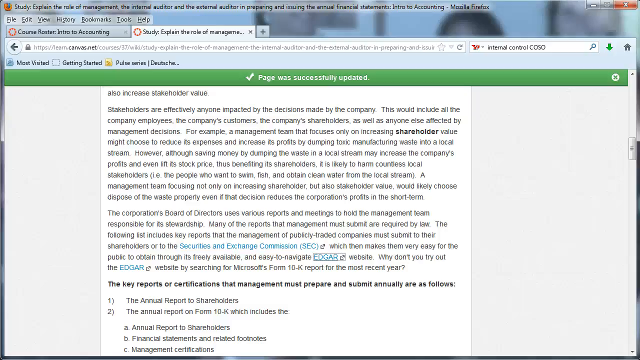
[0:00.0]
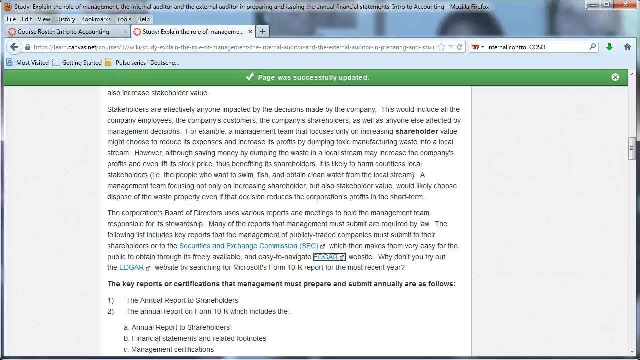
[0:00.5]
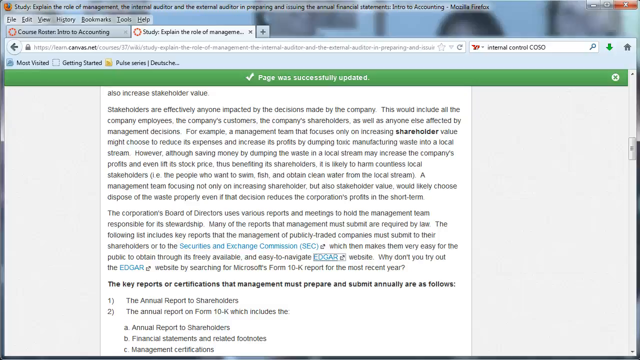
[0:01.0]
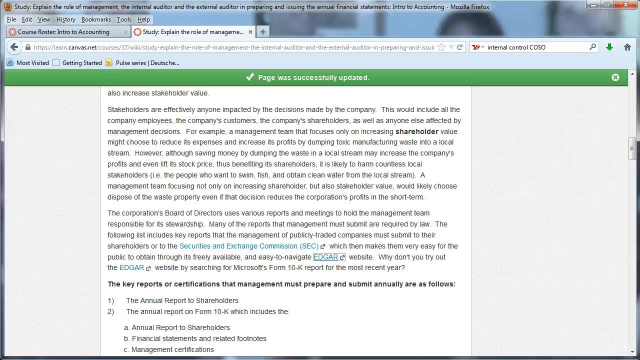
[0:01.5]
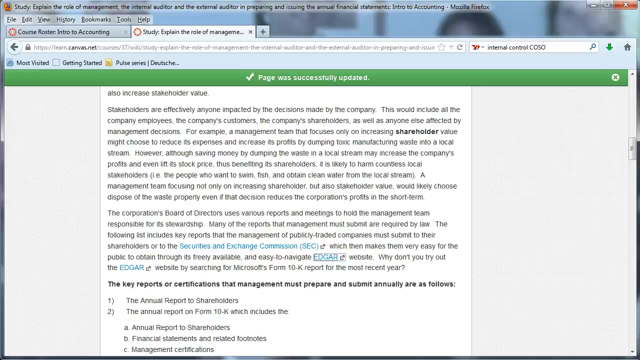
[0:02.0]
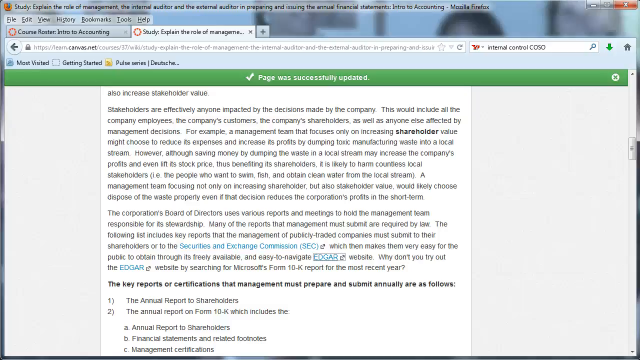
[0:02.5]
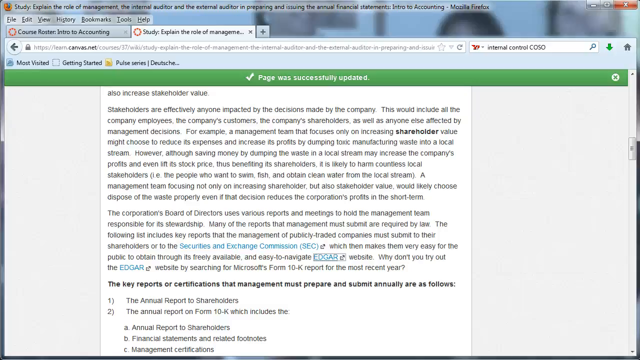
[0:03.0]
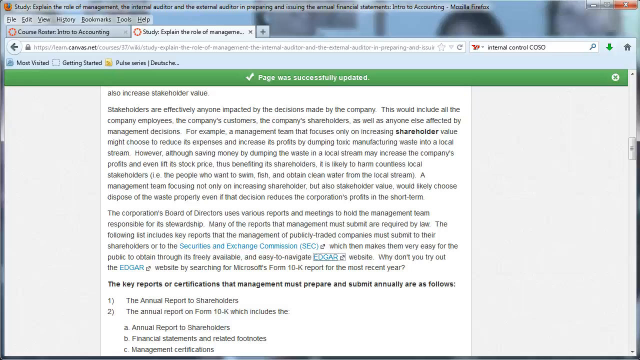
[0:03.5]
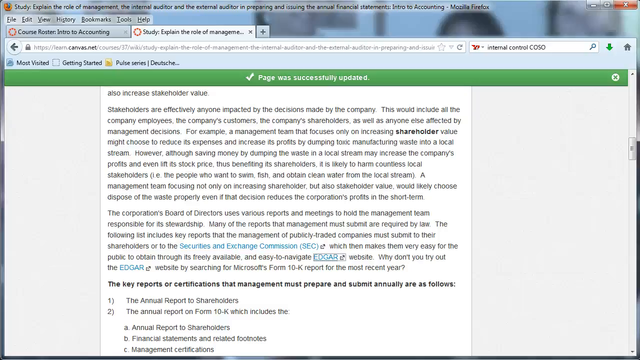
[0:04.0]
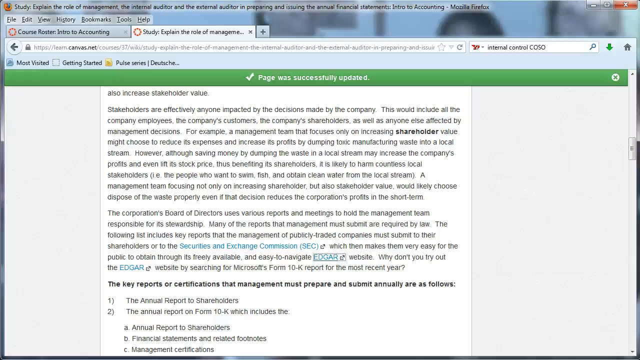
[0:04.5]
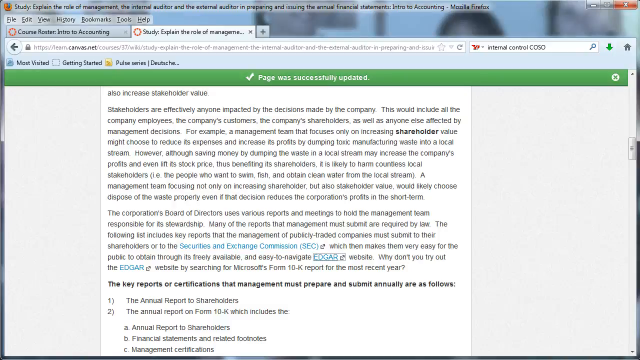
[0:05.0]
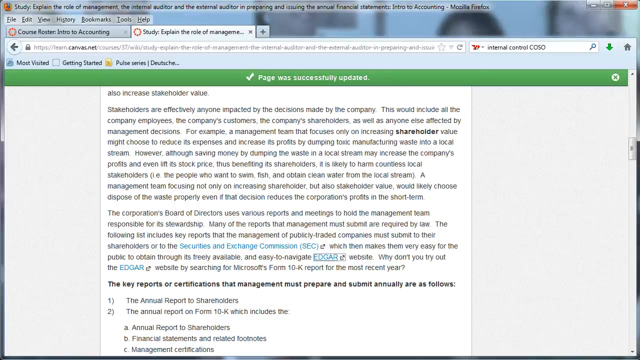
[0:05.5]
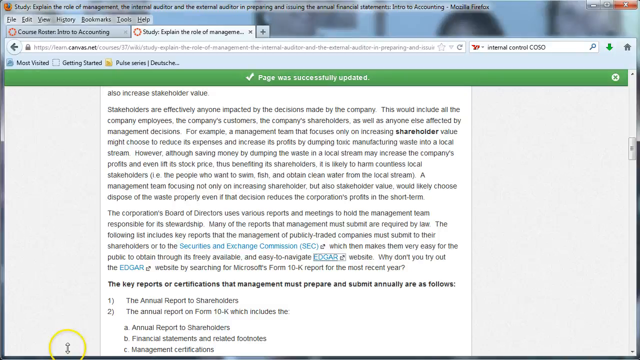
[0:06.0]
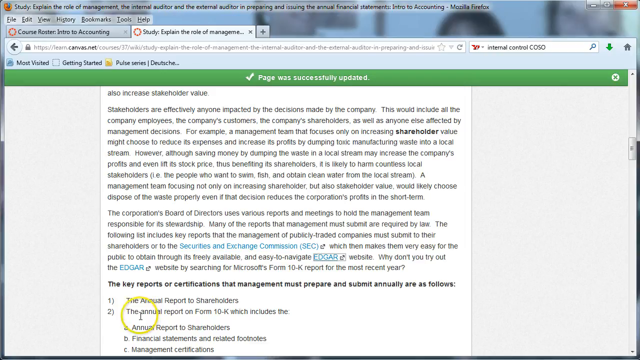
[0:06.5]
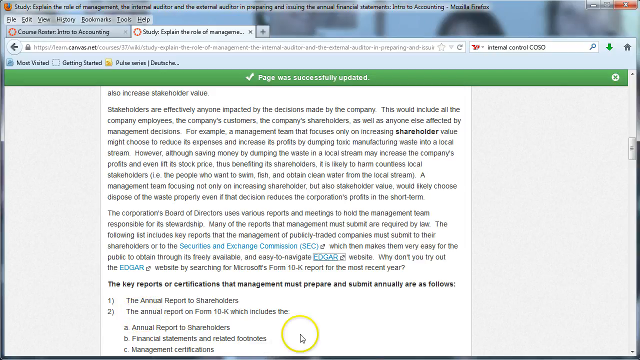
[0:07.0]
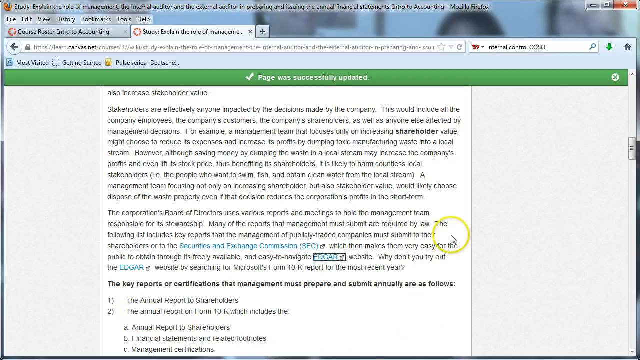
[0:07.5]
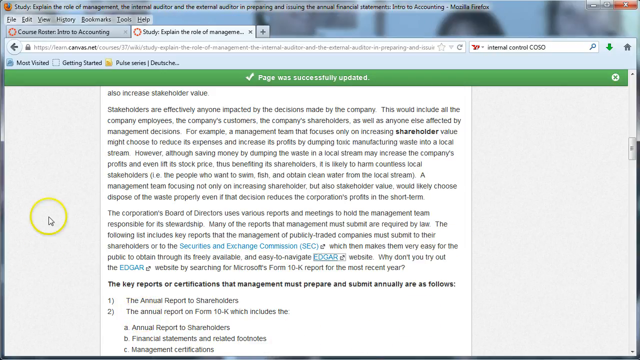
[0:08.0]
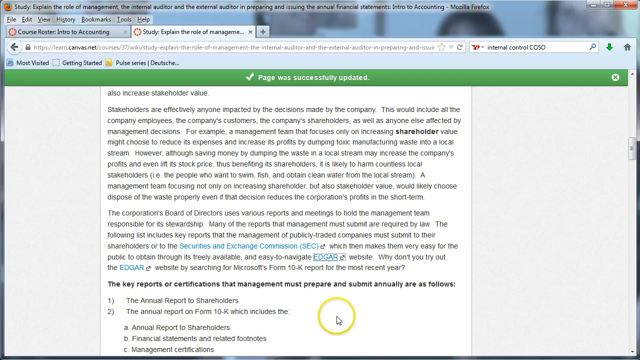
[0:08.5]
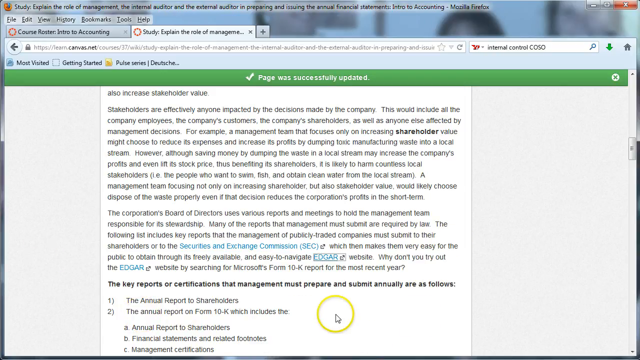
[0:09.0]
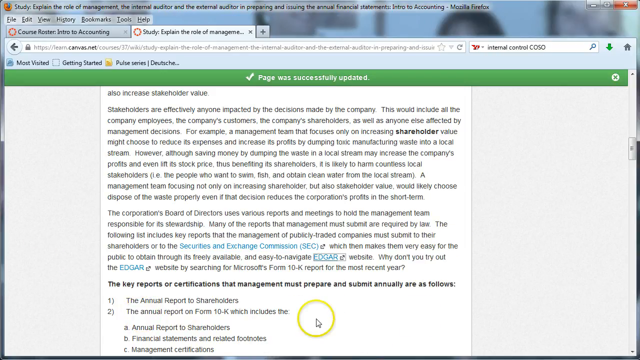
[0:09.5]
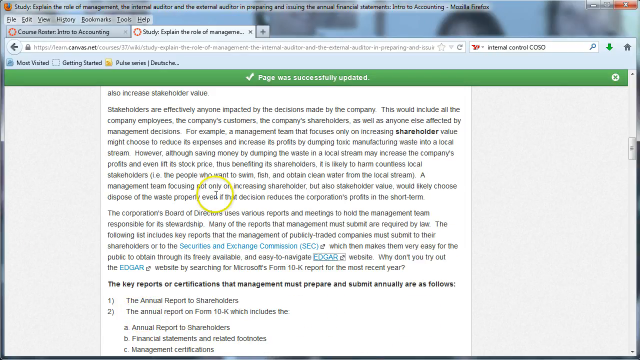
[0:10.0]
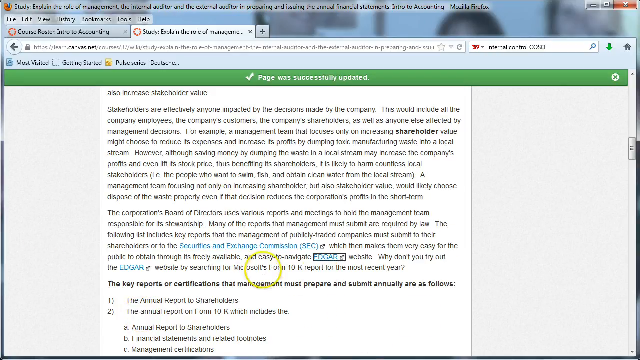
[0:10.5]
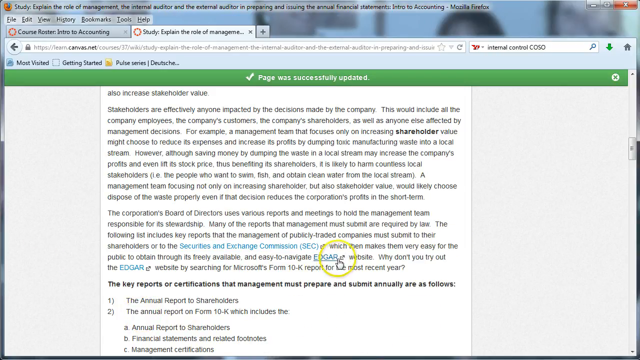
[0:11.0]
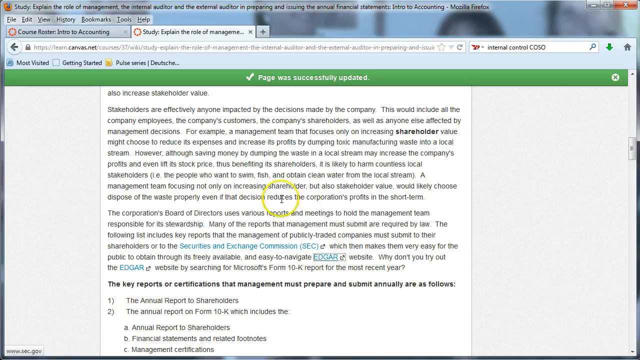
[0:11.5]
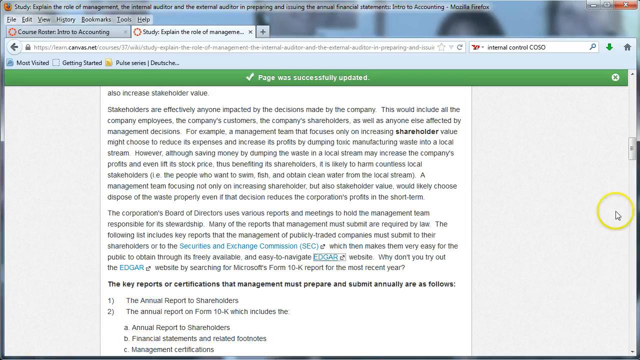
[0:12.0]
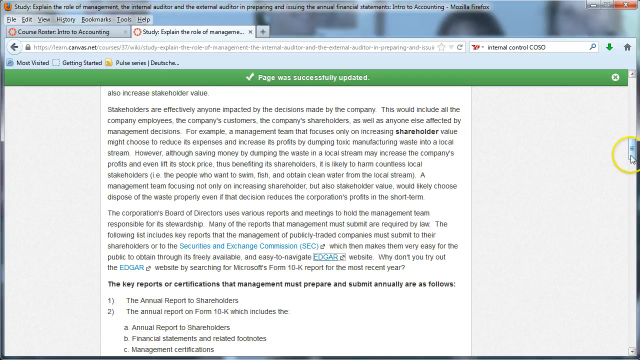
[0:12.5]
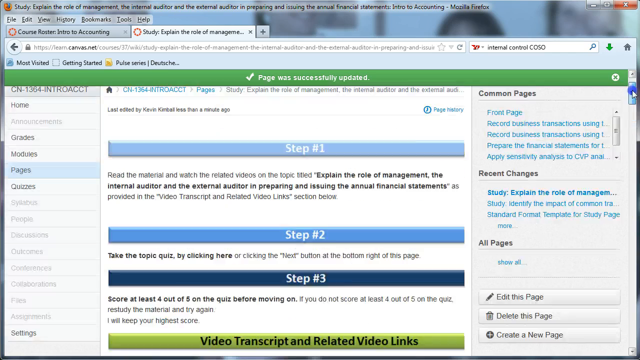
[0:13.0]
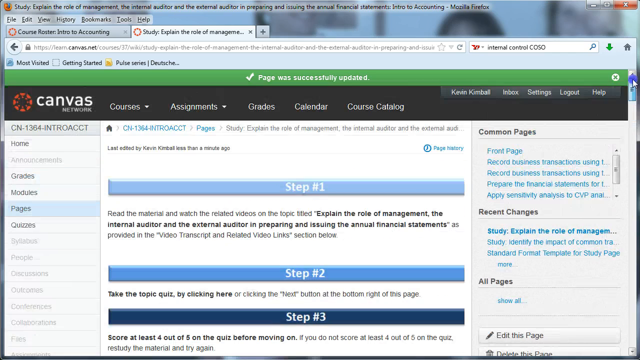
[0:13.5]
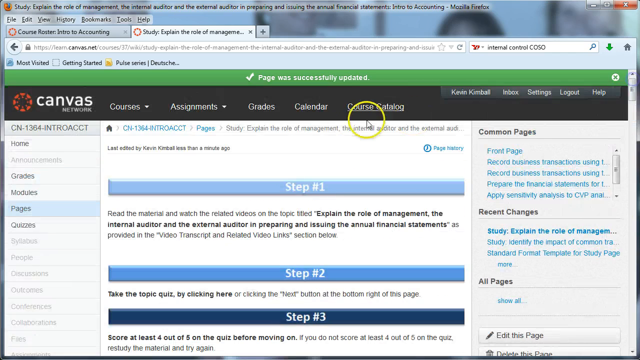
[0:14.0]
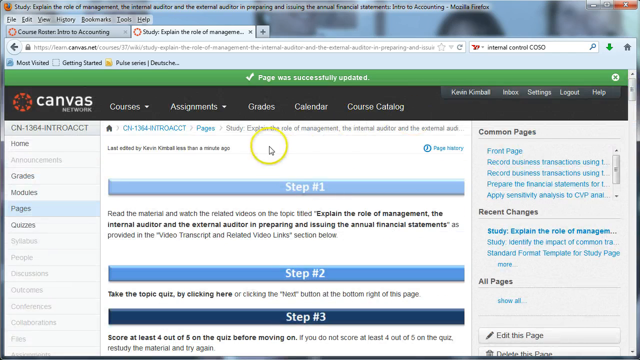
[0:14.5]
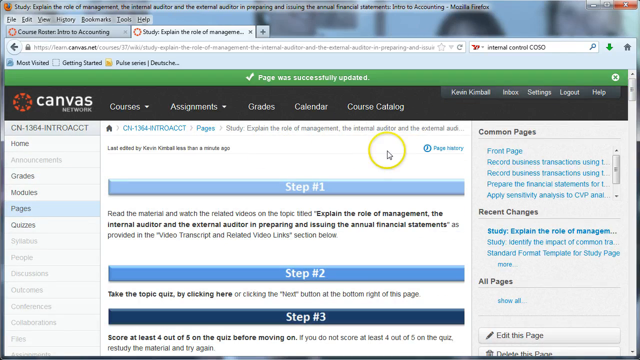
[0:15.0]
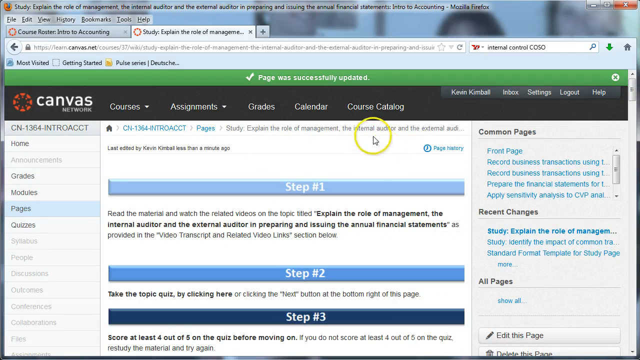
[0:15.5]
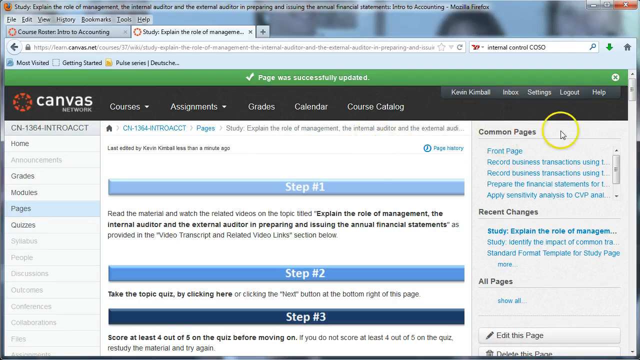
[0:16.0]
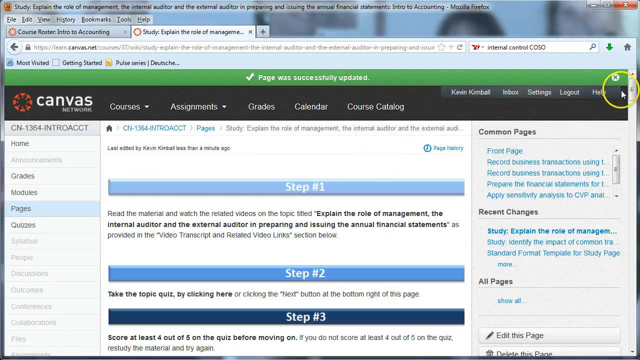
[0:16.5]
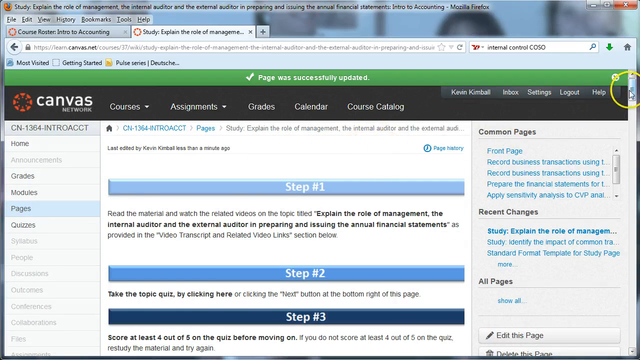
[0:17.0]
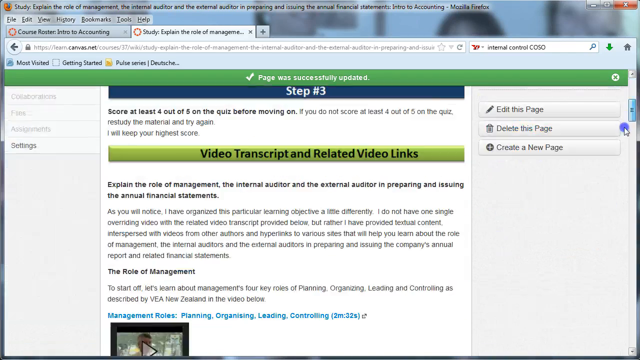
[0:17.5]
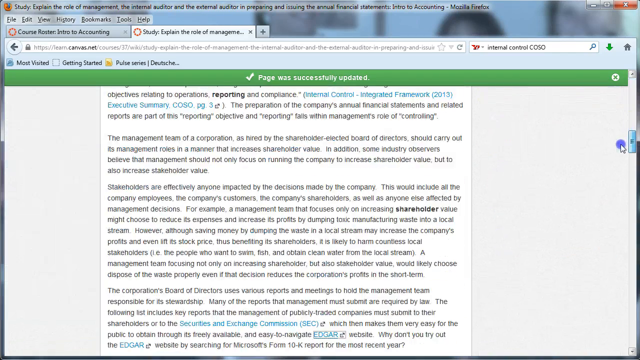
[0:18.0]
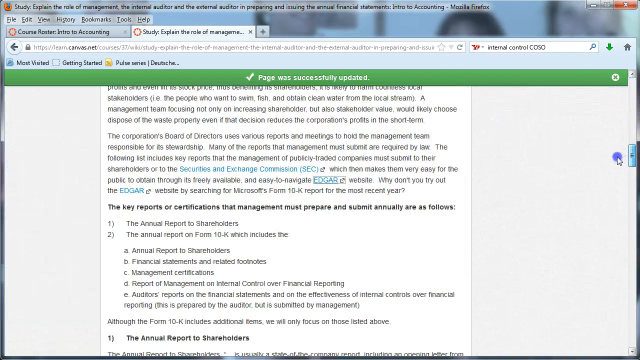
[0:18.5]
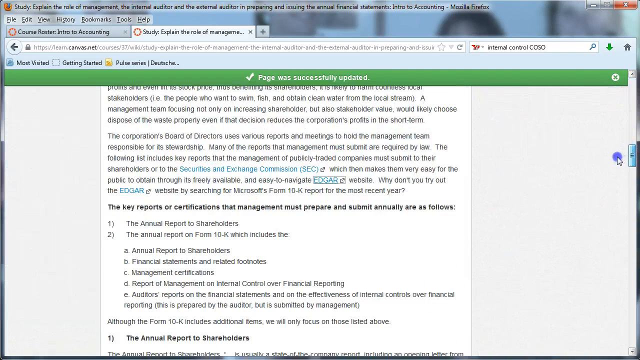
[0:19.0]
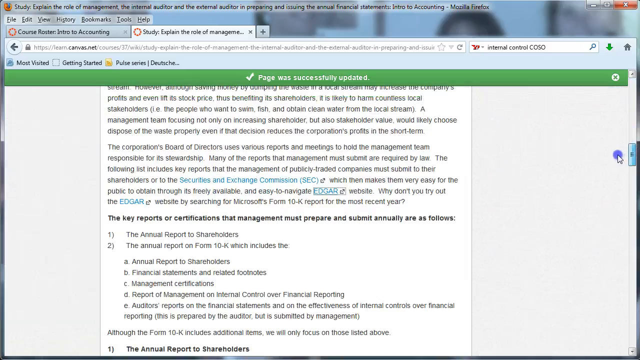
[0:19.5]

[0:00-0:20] A browser tab shows a web page on Canvas Network. The page contains a lot of paragraph text and a list of items, including what looks like a listing of steps. A mouse cursor highlights certain parts of the page. Judging from the text and the tab, the page appears to be about shareholders, possibly relating to annual reporting or to a company or its management; the text mentions explaining the roles of management.